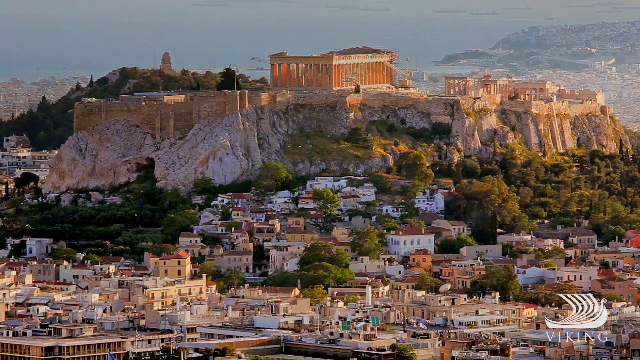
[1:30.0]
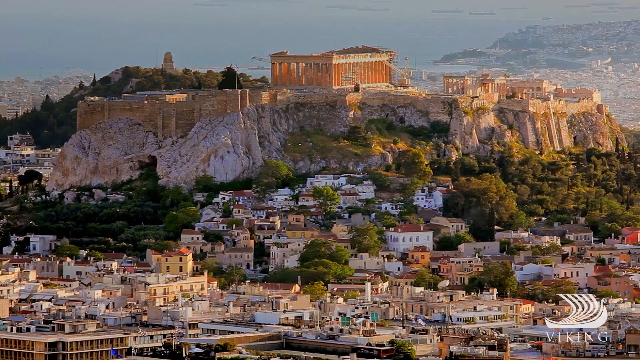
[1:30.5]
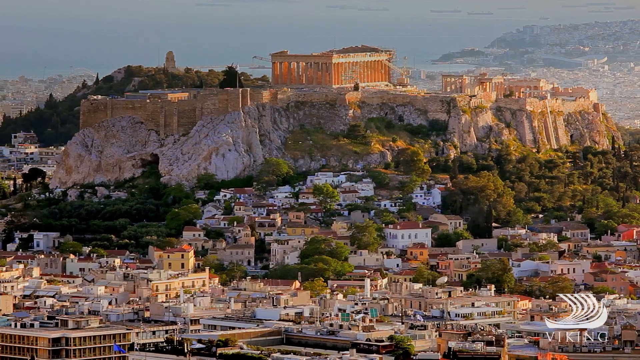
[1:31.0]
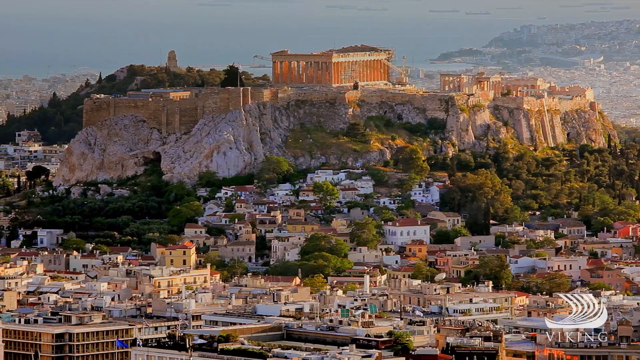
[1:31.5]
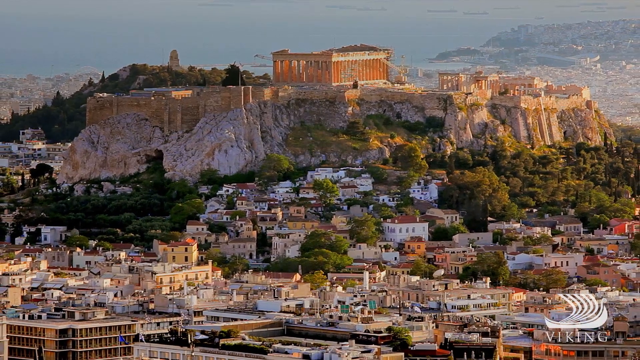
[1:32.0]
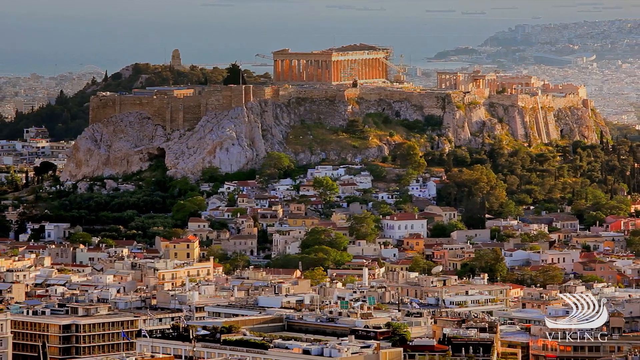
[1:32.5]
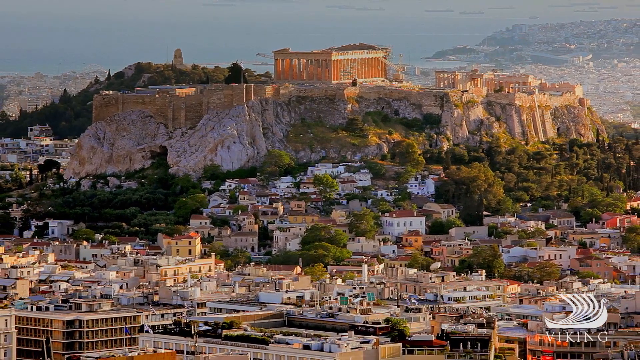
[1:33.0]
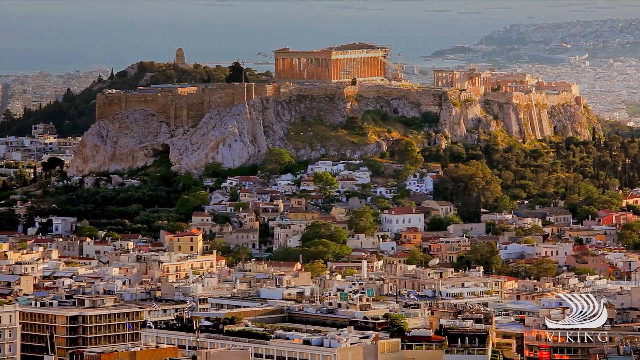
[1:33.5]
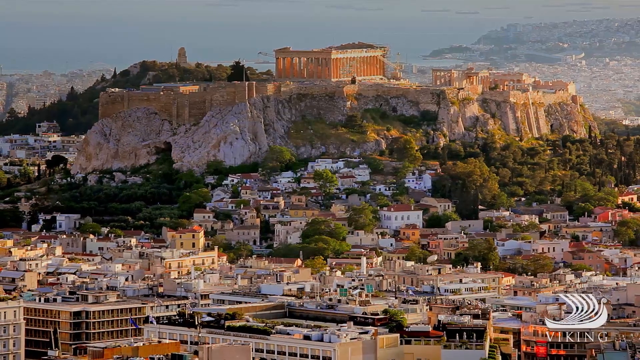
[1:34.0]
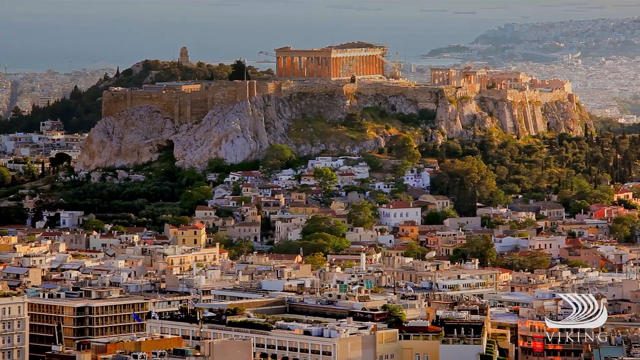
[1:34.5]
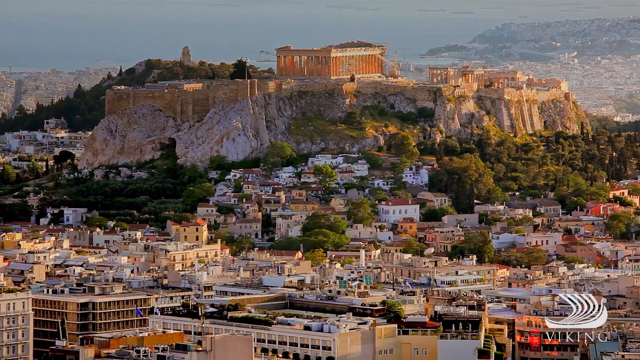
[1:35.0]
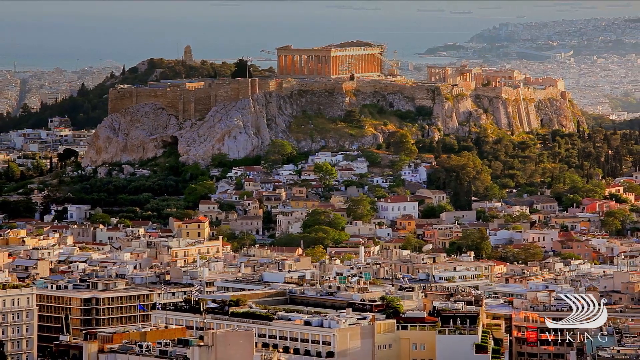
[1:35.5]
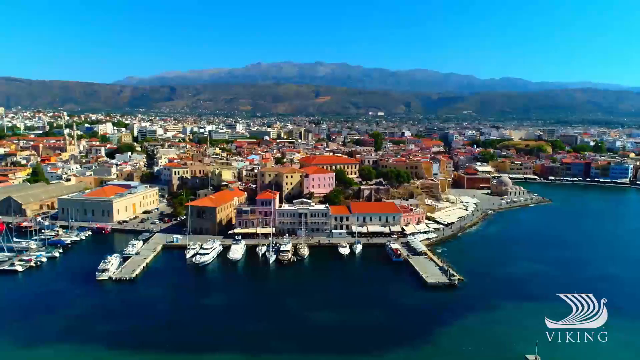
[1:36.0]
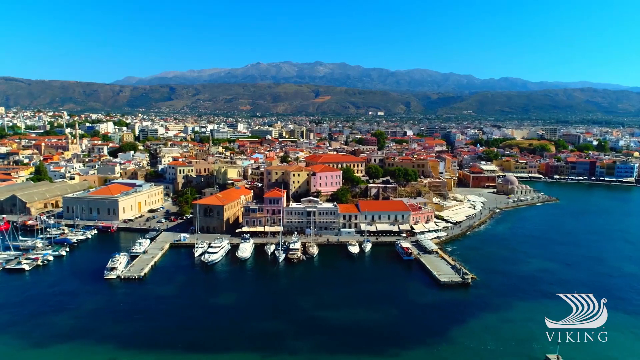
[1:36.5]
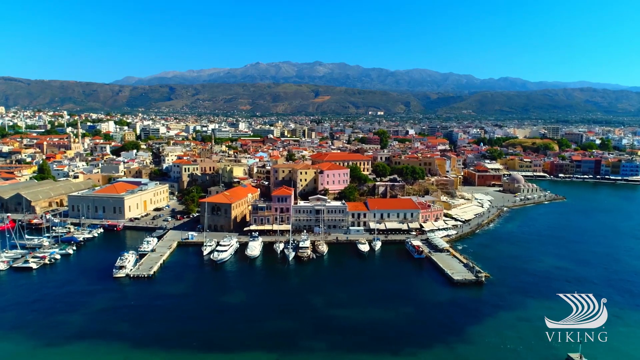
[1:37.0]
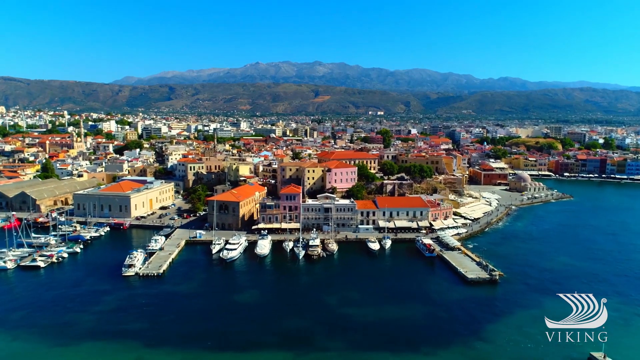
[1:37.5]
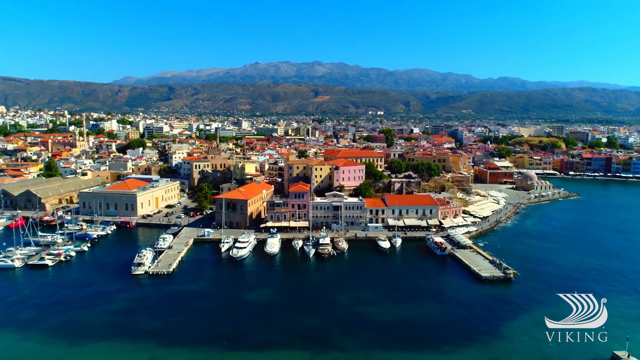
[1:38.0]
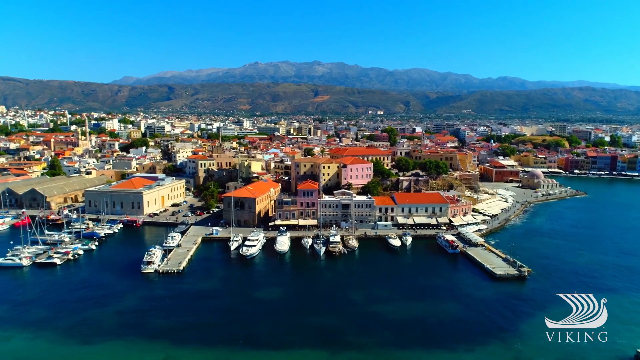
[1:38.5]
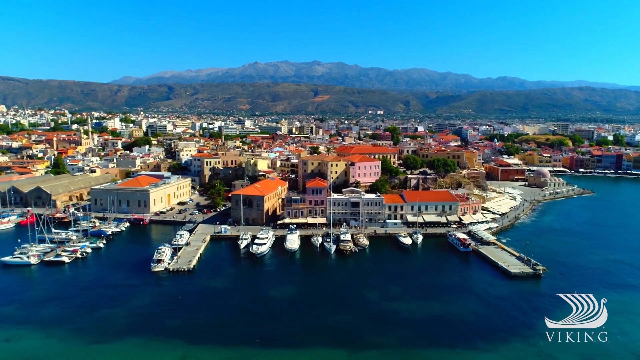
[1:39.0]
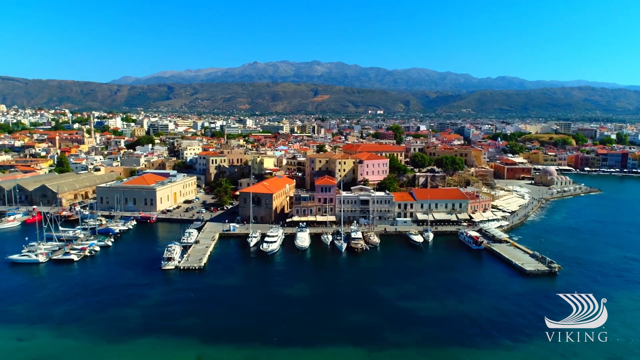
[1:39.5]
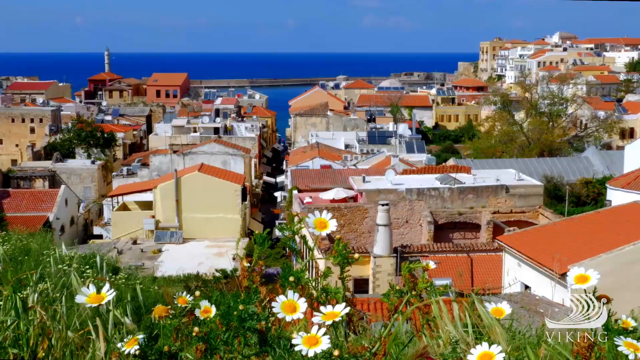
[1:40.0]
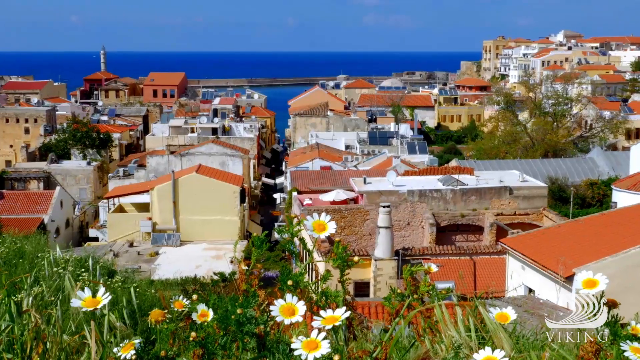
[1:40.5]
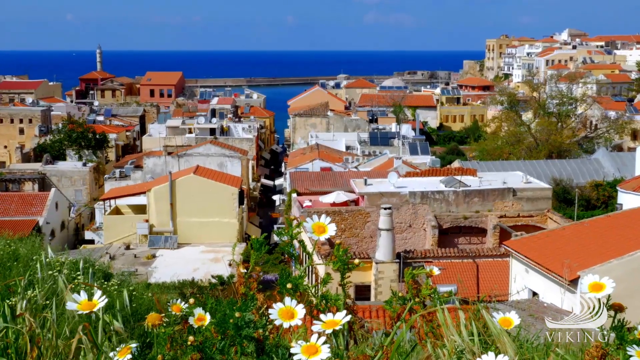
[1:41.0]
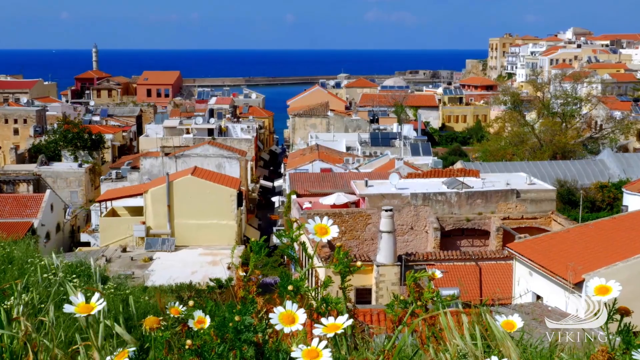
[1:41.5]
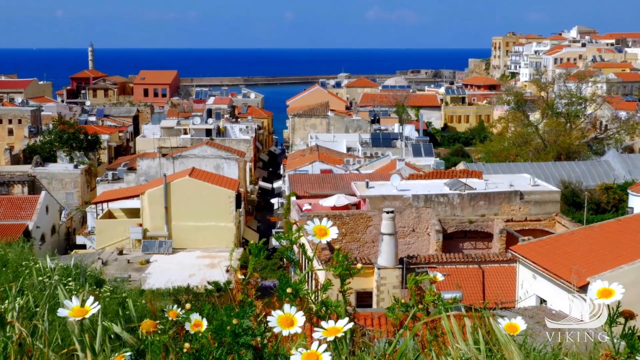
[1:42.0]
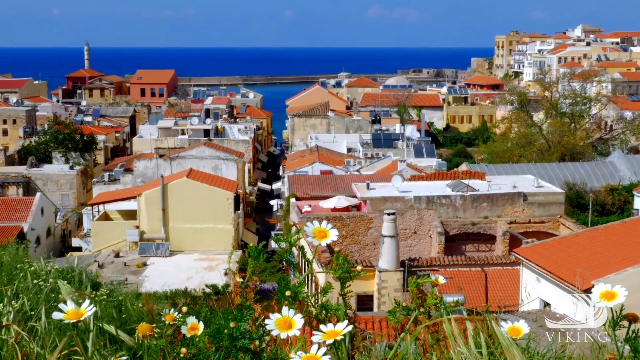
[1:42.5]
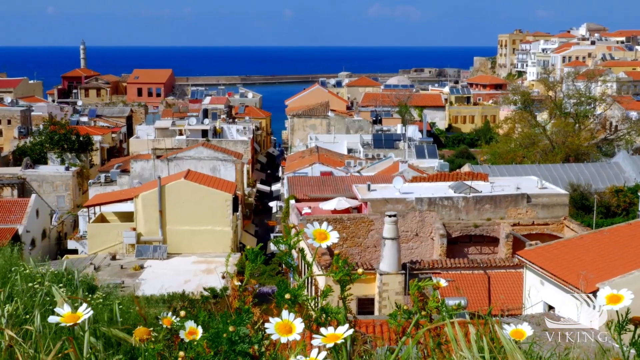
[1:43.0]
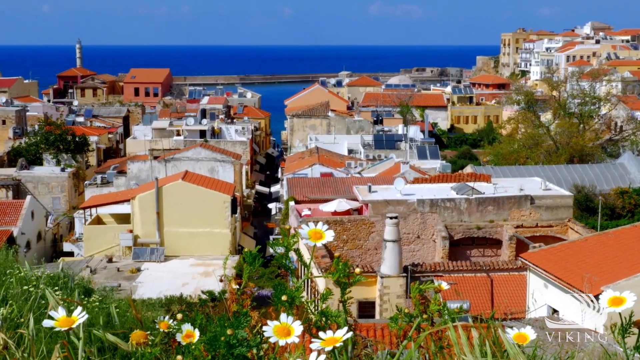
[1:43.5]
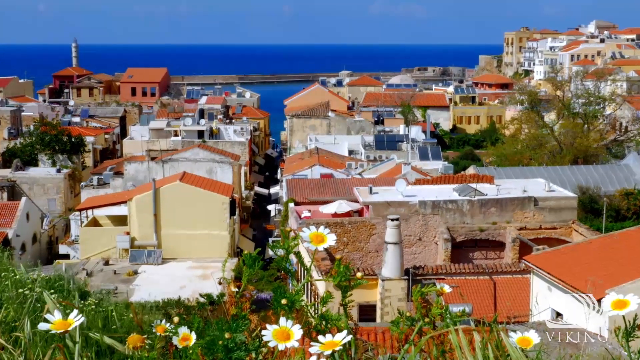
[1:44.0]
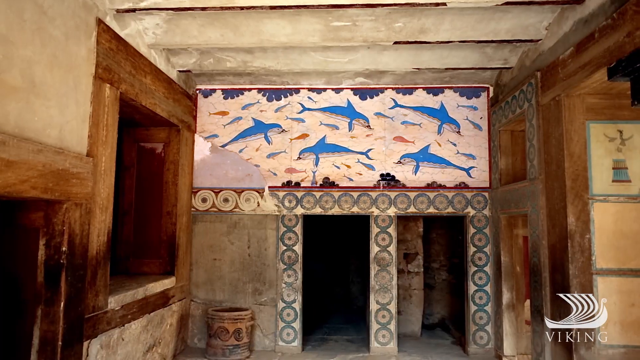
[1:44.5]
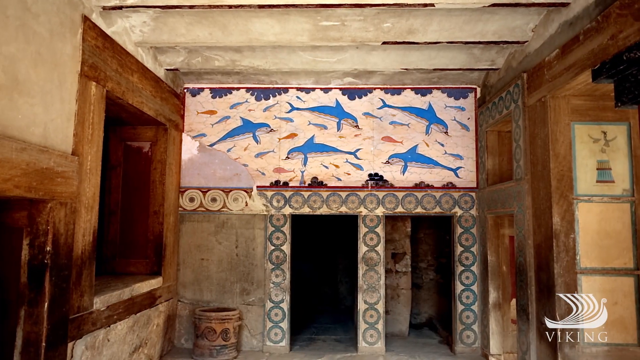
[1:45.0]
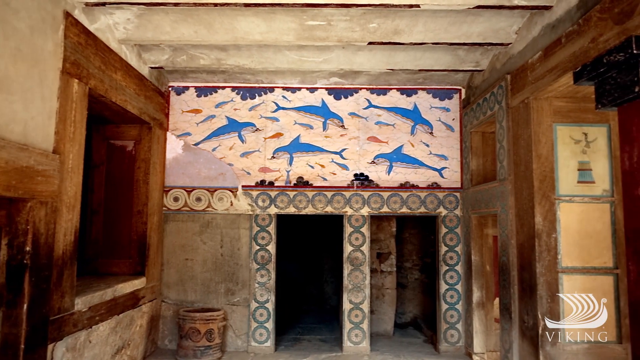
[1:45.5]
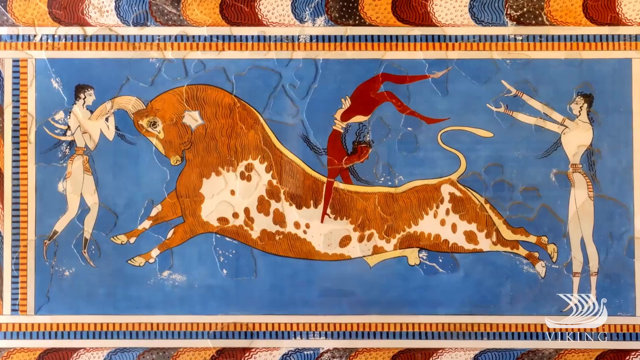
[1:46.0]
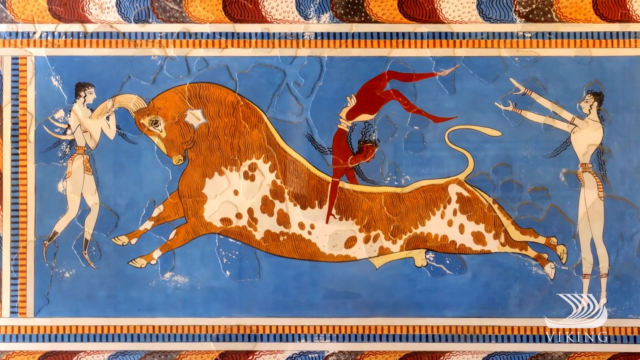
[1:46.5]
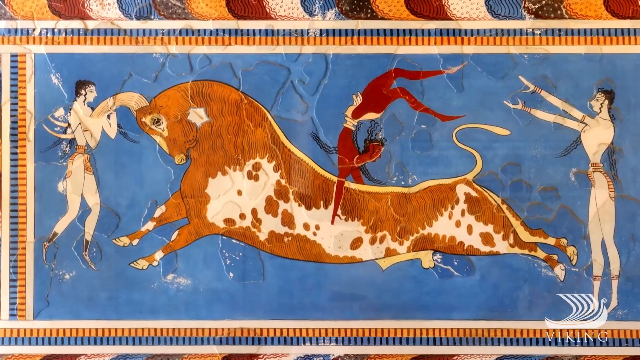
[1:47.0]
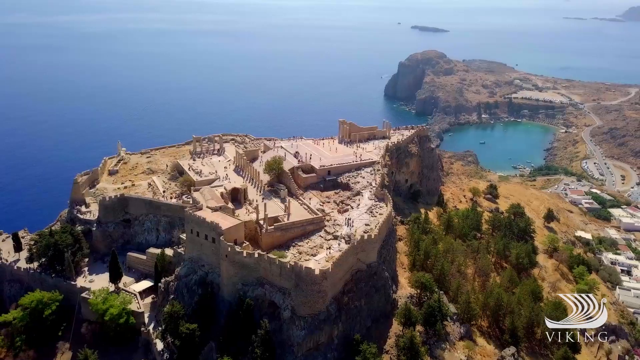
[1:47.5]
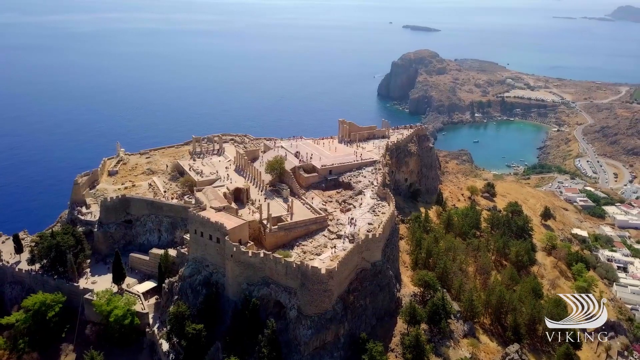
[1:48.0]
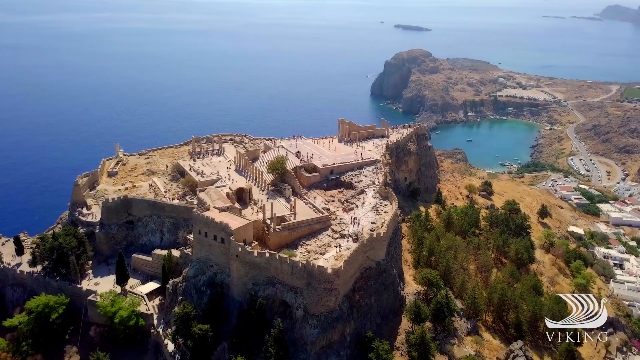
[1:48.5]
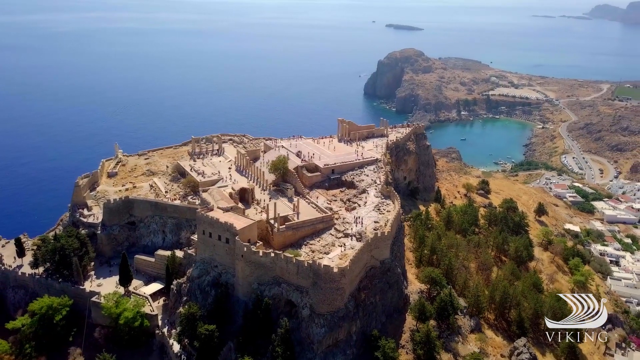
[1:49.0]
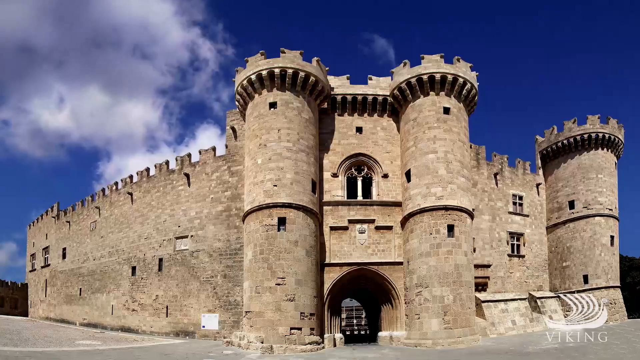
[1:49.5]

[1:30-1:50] The view continues to pan out away from the Acropolis and reaches the coast, with many docks and parked boats, in a farther shot showing much of the coastal city. A close-up shows many white daisies in the foreground, the red-roofed city behind, and the sea in the far background. An interior shot shows five dolphins on a white background, which looks like a large painting above two doorways in an older, ruined-looking area where the wood looks worn. A close-up of an artwork appears to show a bull with a bull rider in red who is upside down, acrobatically, and a person on either side at the front and rear of the bull; the person on the left has his arms outstretched. It is on a blue background in an abstract or unusual style. An aerial view, rotating a little, appears to show the Acropolis with the ocean in the background. Then a front view shows something that looks like a castle, with blue sky and white clouds behind it.